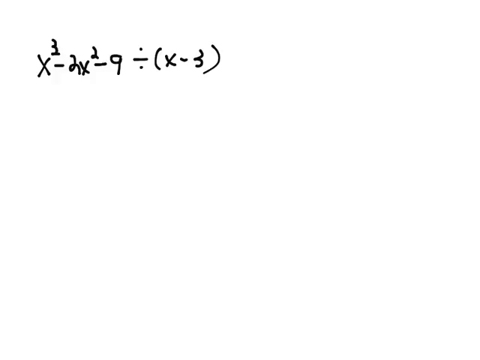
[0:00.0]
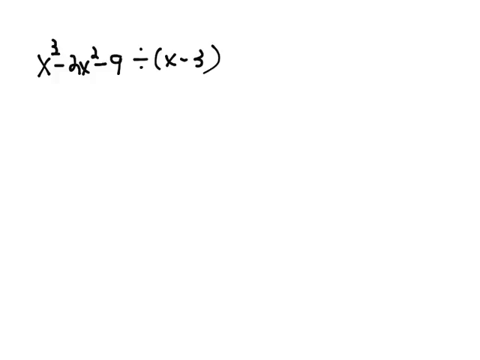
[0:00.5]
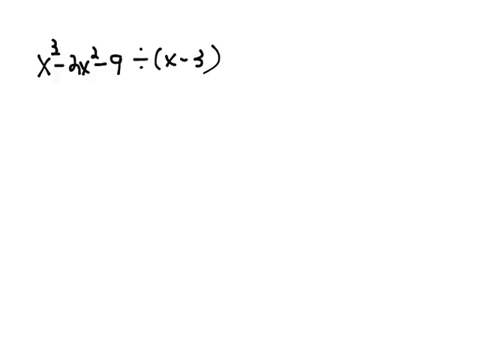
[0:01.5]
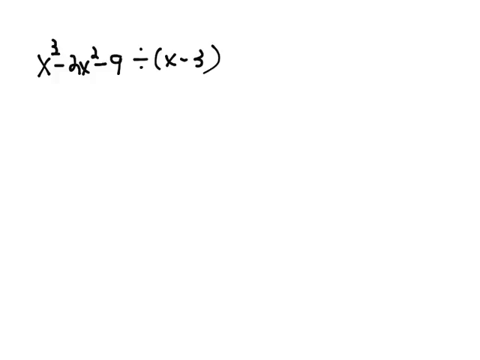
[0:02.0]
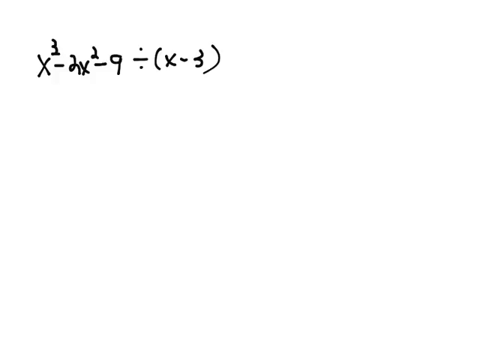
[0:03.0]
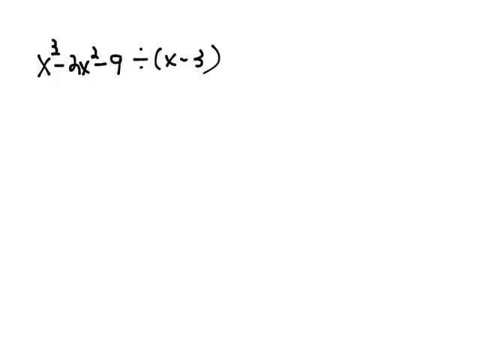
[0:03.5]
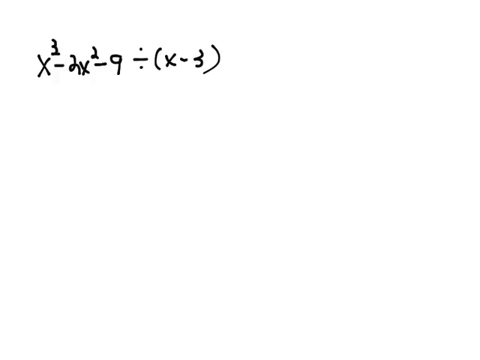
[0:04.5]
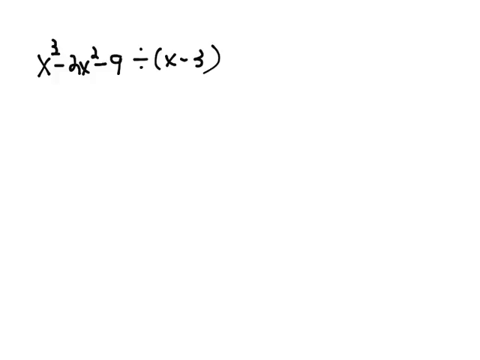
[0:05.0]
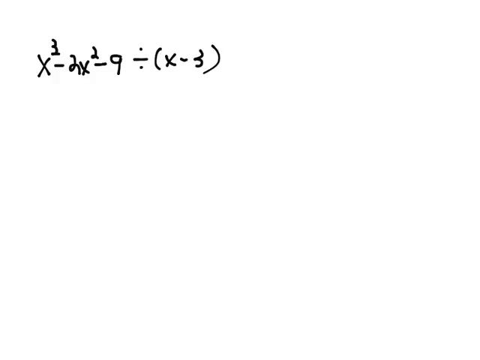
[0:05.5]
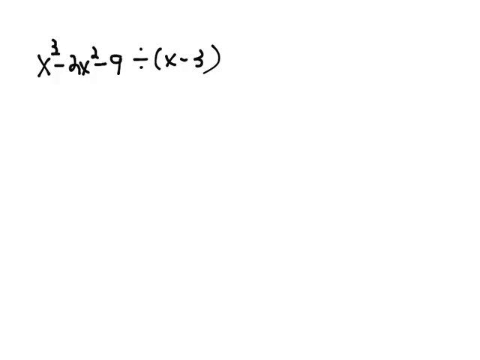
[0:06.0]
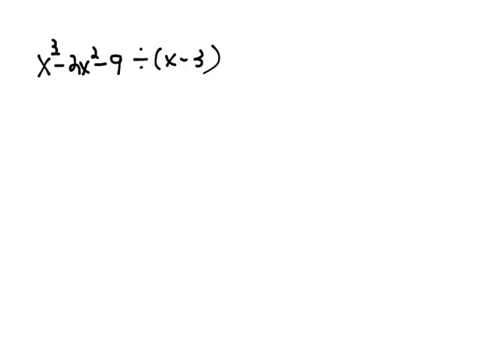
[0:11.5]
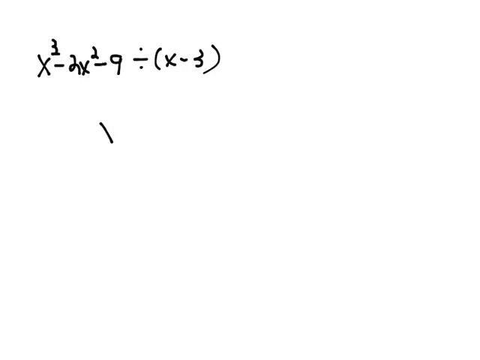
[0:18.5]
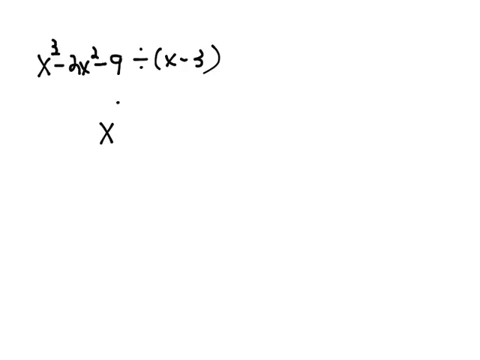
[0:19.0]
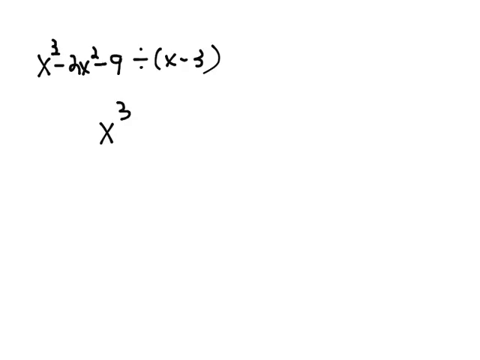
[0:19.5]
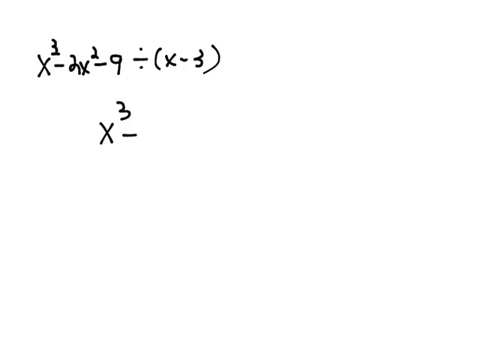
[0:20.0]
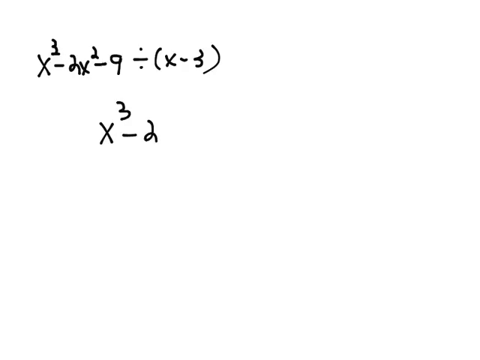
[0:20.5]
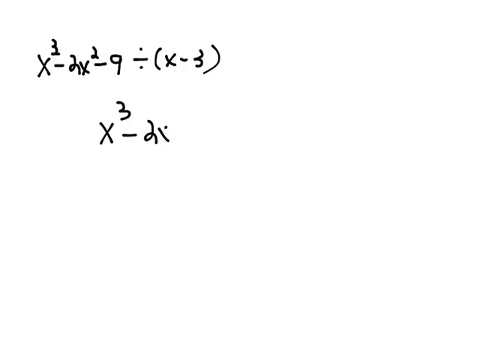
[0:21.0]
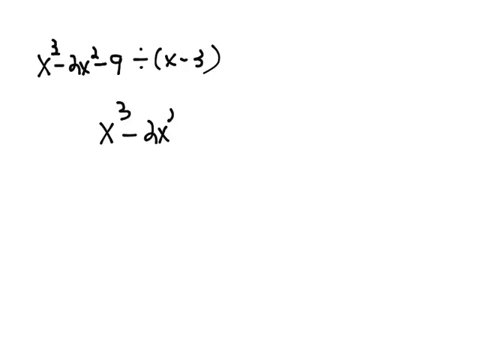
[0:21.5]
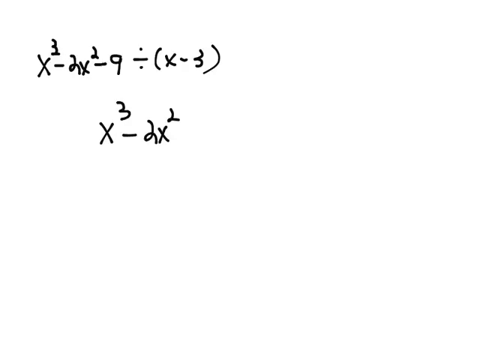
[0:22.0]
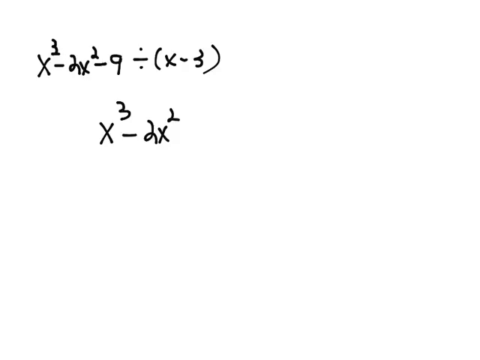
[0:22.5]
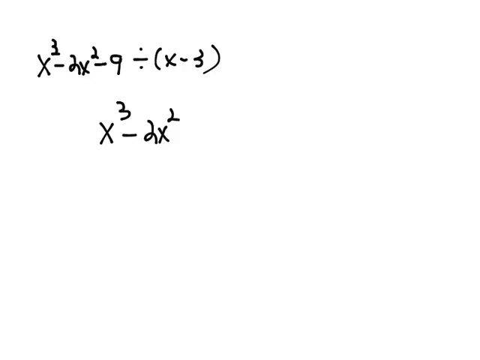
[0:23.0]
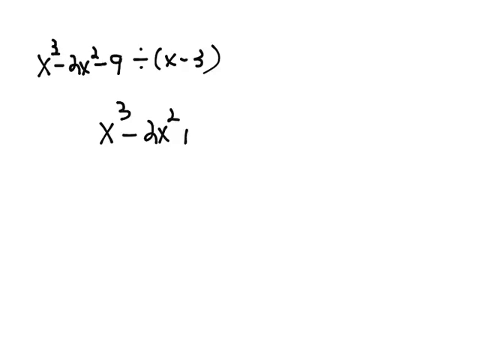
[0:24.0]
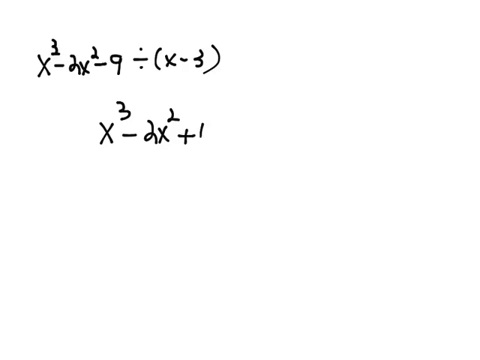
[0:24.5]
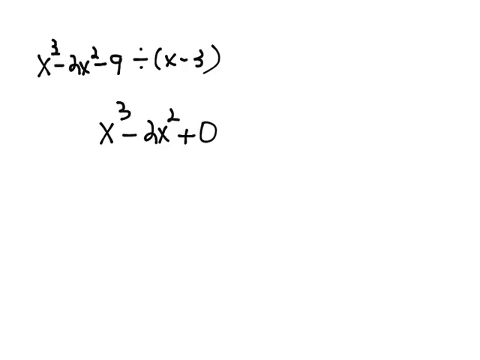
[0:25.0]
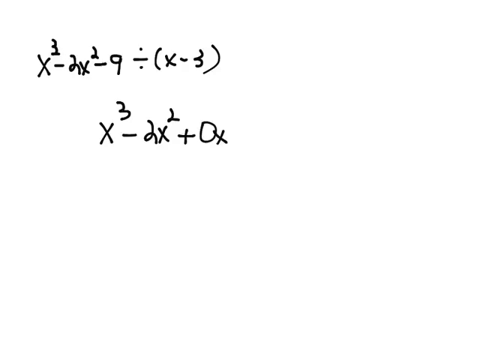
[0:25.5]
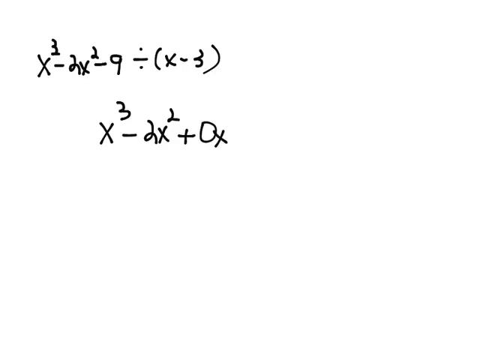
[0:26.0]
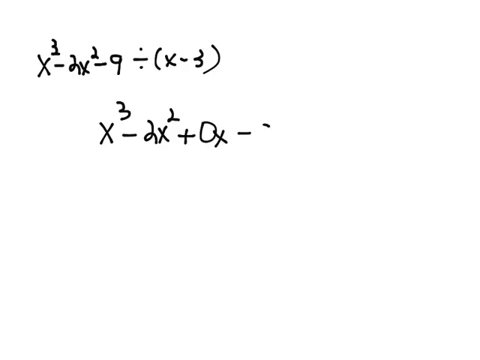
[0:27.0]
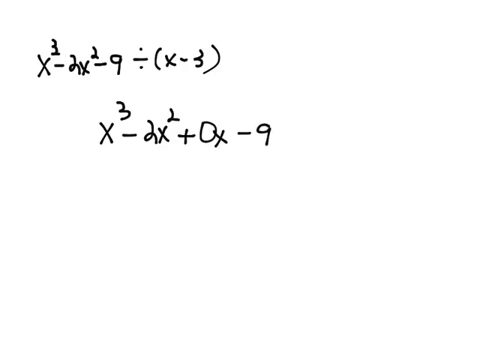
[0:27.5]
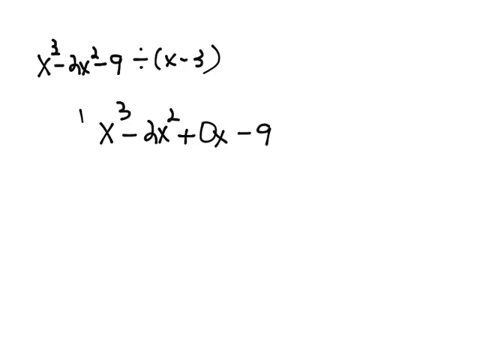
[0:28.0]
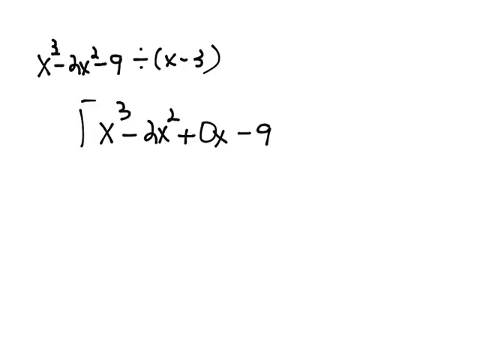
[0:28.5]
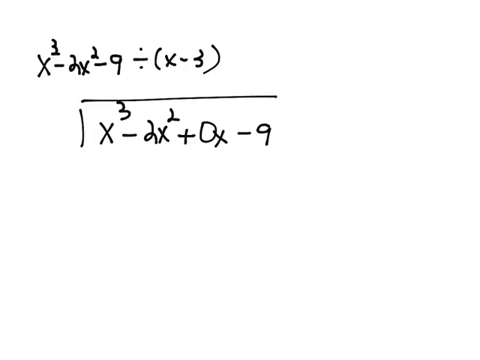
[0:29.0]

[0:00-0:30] The video begins with a mostly white screen, except for the bottom portion, perhaps the bottom 20% of the screen, which starts light gray and blends slightly into a darker gray and then into black. In the upper left portion of the screen is a math equation that looks handwritten in black. Read left to right, it is x³ − 2x² − 9 divided by (x − 3), with the 3 written above and to the right of the x to indicate x to the third power. There are no other notable markings on the screen at this point. Then writing begins to appear in the center of the screen: x³ − 2x² + 0x − 9 divided by x.